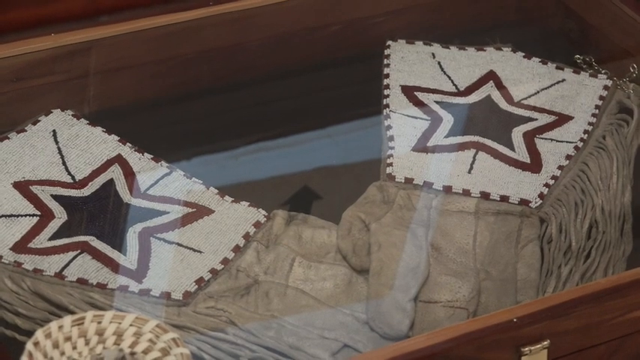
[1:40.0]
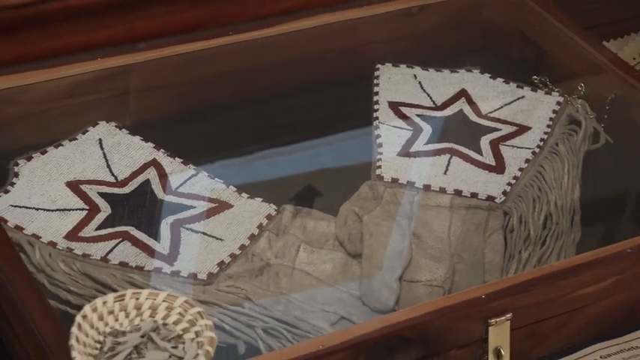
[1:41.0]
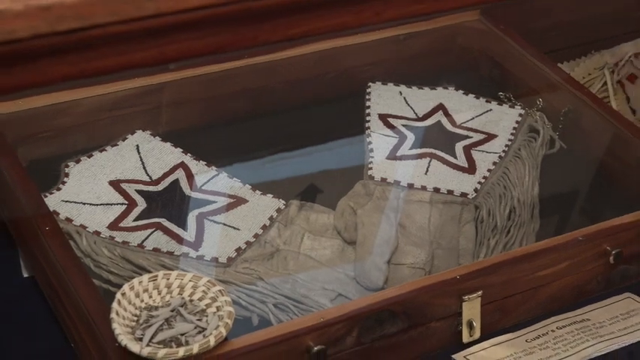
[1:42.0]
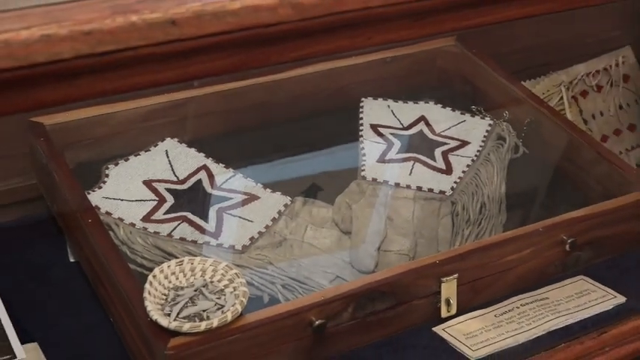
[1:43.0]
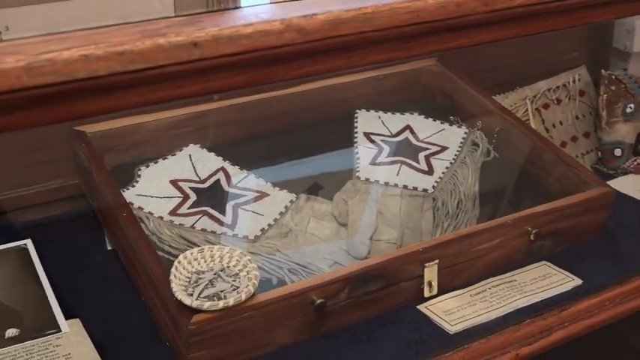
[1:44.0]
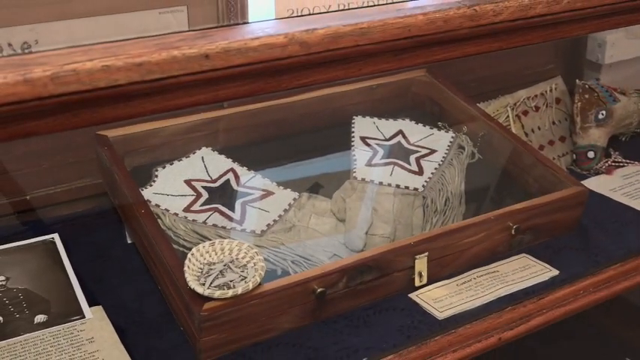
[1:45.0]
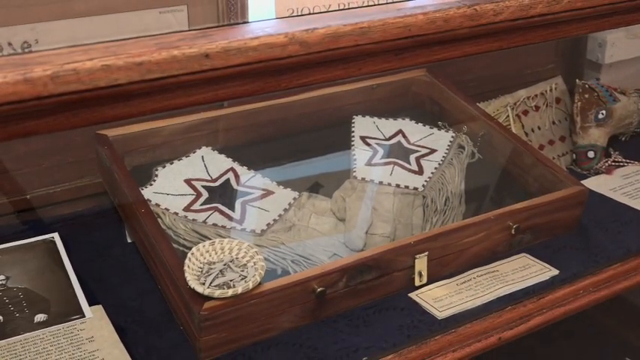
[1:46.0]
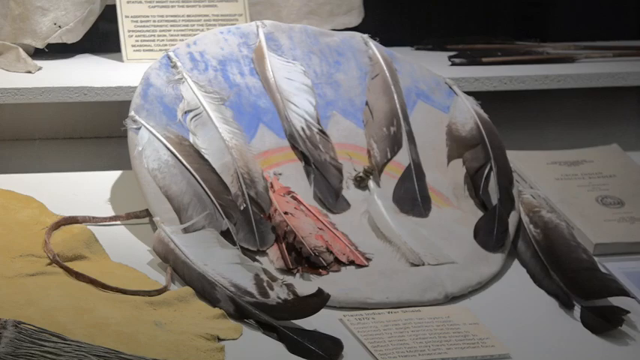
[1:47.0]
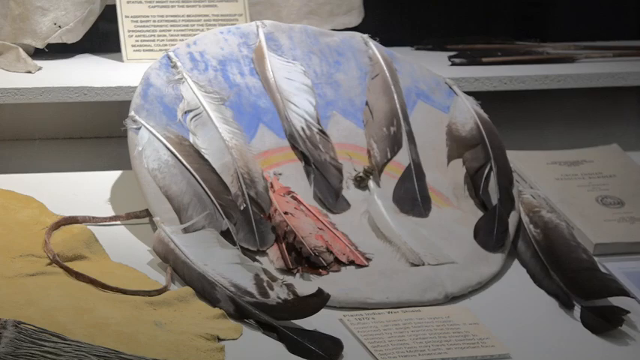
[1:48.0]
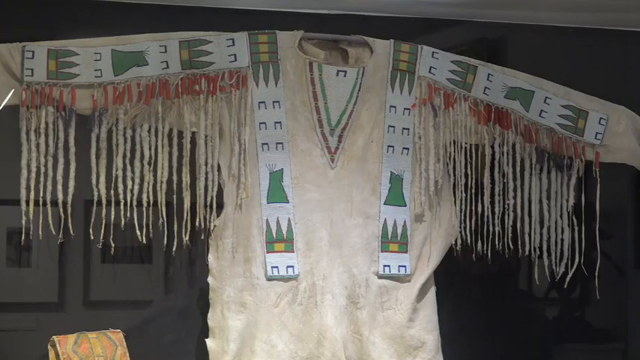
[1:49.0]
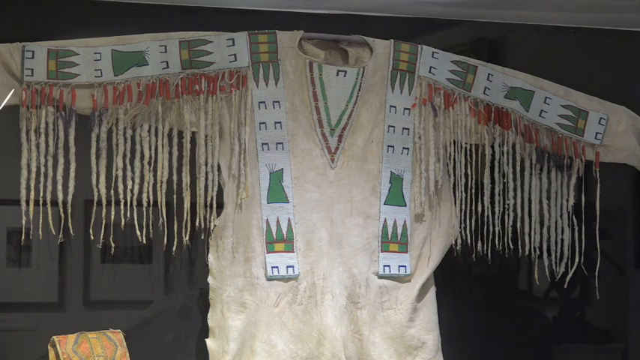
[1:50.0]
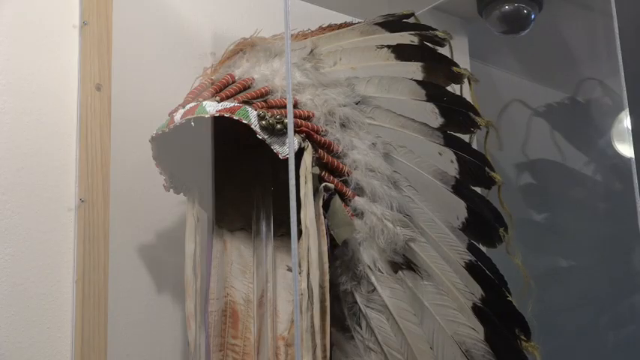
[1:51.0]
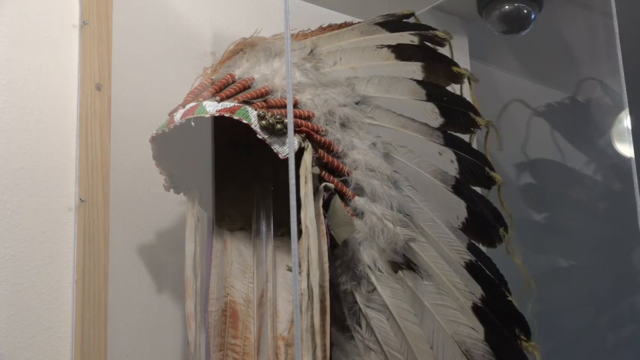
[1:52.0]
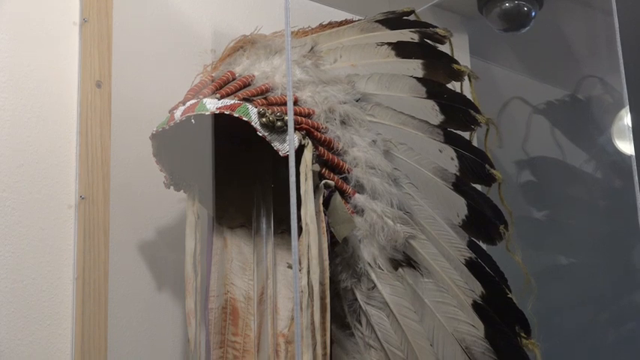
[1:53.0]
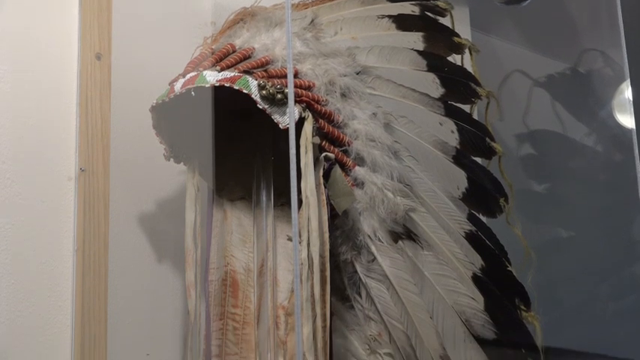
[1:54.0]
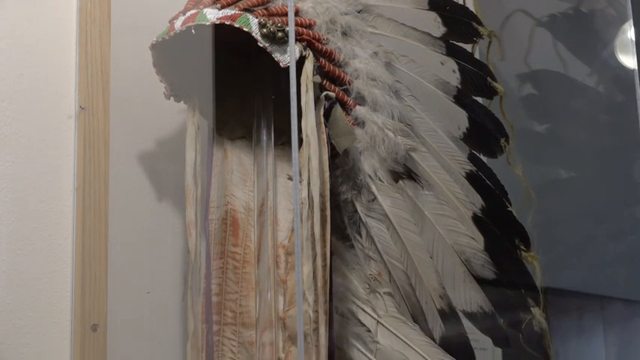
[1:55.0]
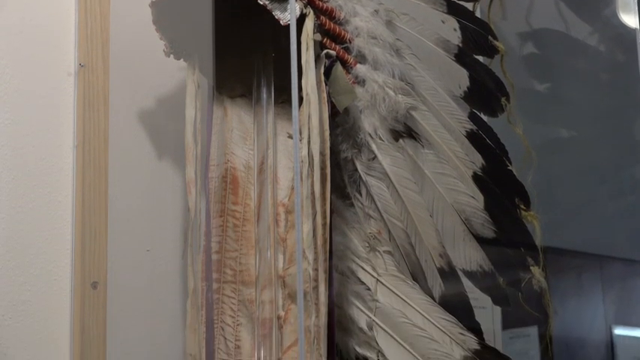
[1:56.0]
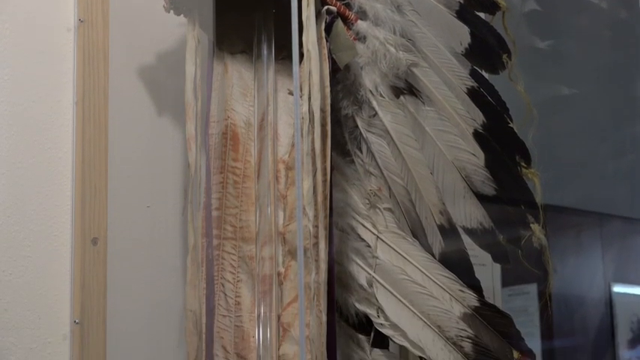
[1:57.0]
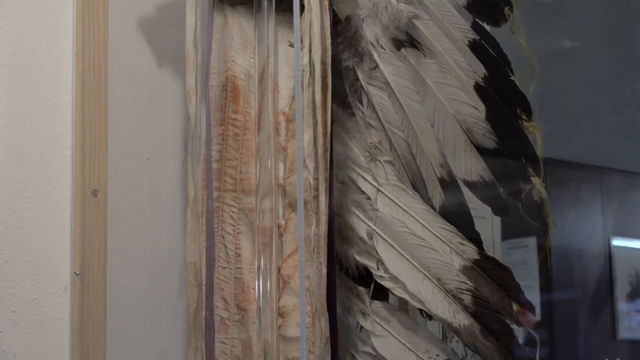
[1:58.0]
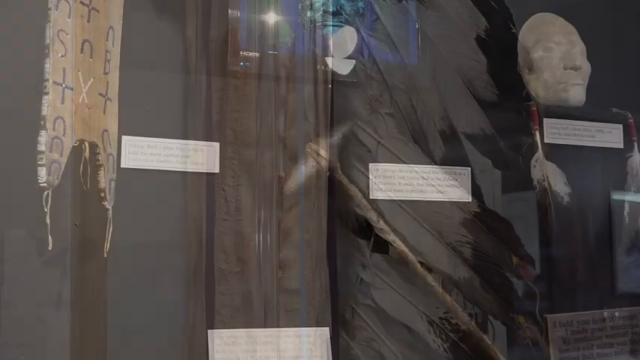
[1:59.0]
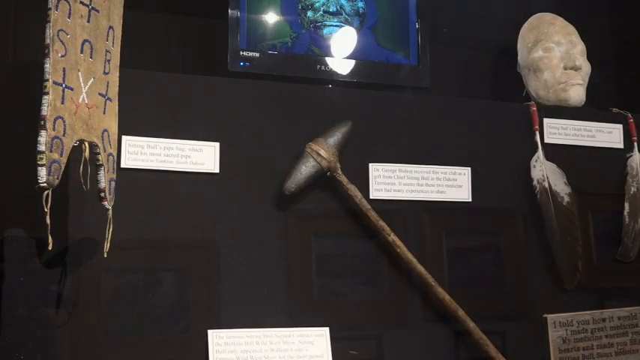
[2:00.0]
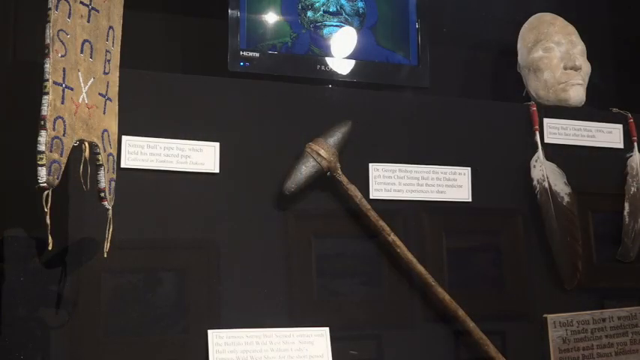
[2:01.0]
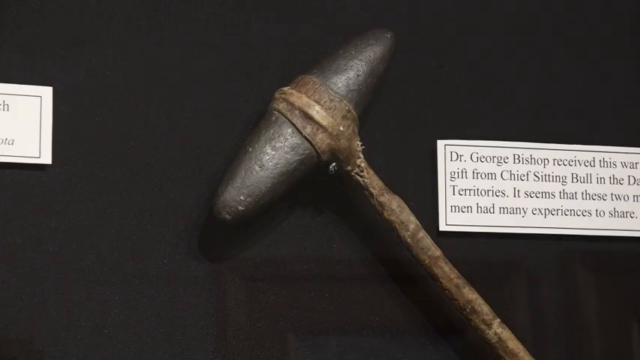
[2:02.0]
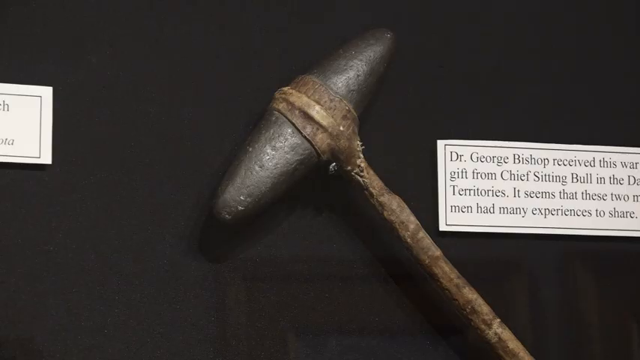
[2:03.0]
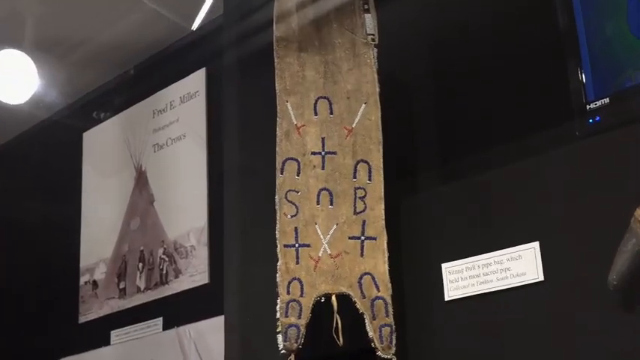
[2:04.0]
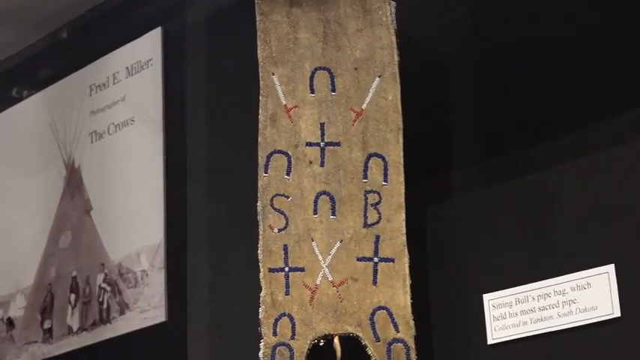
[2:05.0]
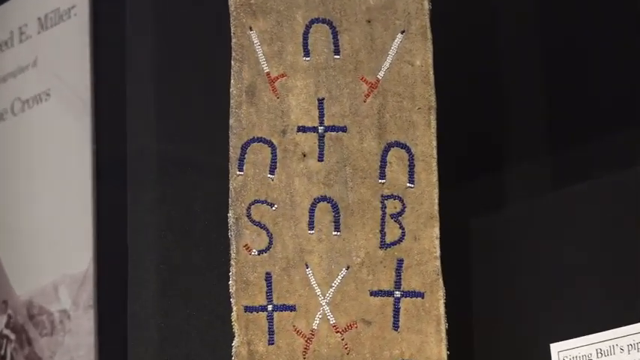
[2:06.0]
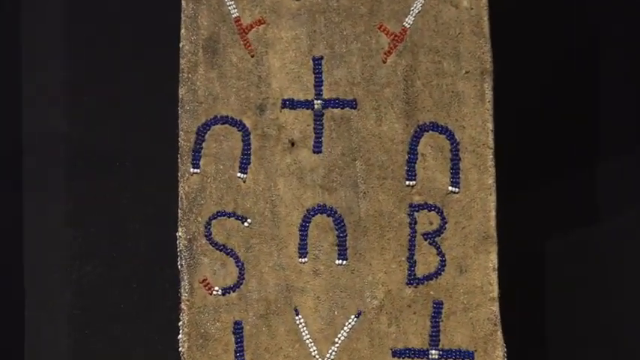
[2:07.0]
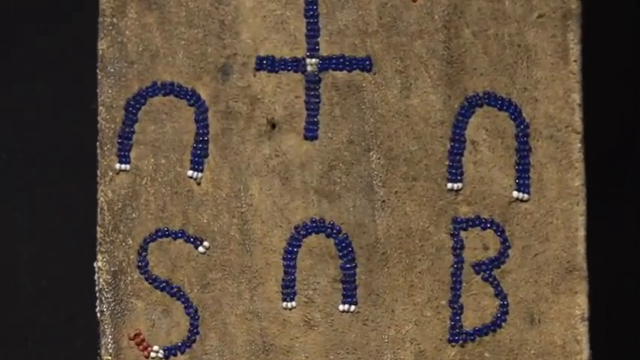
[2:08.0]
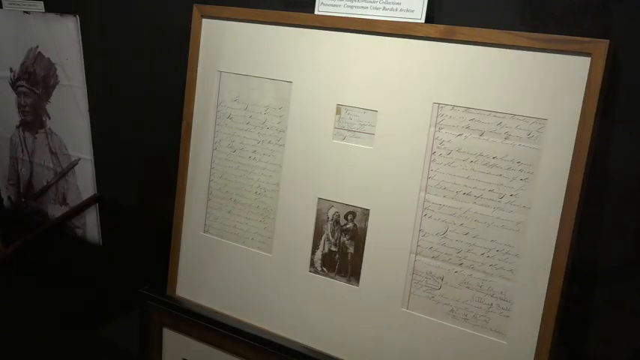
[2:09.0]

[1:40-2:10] A wooden box has gloves inside it, with a glass display on top of the box. The gloves have blue, white and red stars on them. Several more pieces of Native American gear follow, displaying Native American culture with feathers and long strands of yarn; one of them is a Native American headgear with several long white and black feathers. Several other objects appear, including picture frames with messages on them, apparently displaying the history behind Native American people and their culture. The setting is indoors, with a good amount of artificial light making everything highly visible.